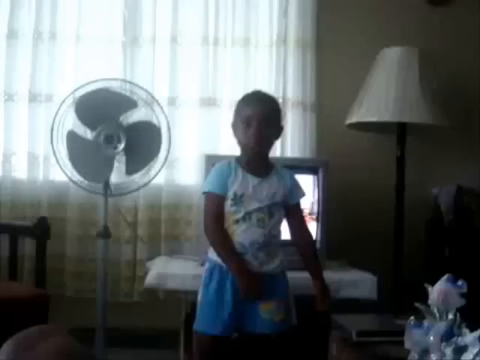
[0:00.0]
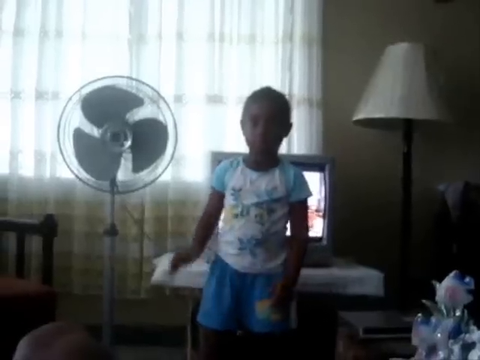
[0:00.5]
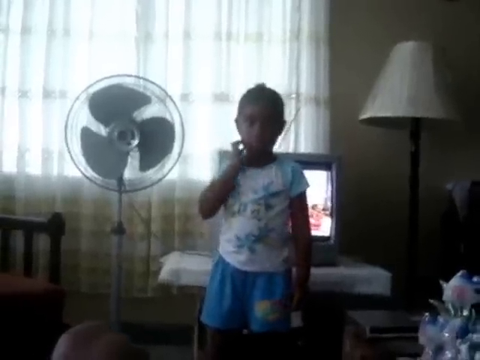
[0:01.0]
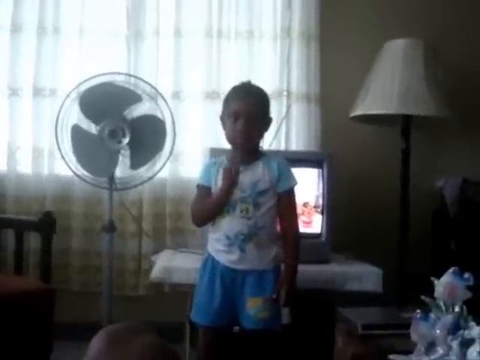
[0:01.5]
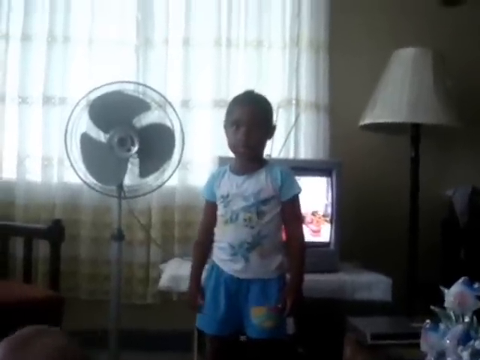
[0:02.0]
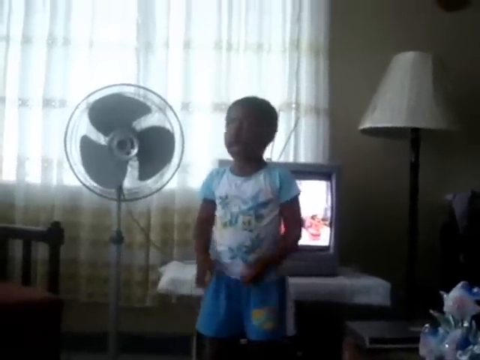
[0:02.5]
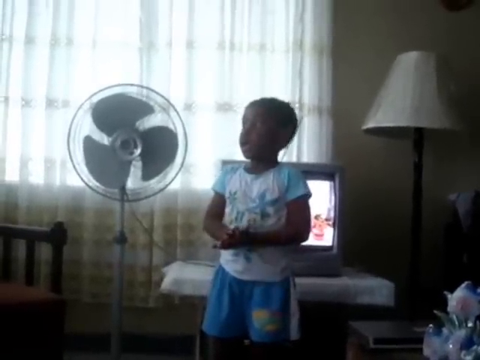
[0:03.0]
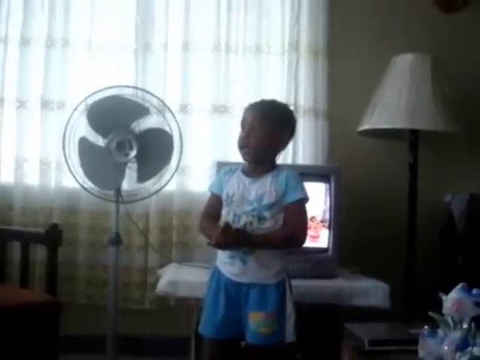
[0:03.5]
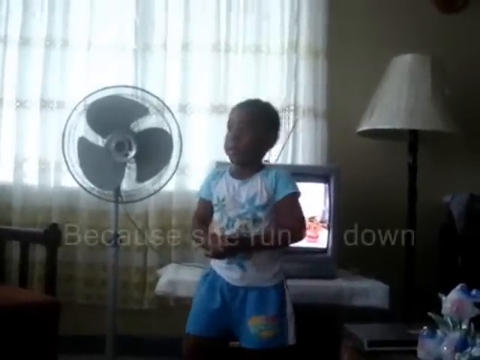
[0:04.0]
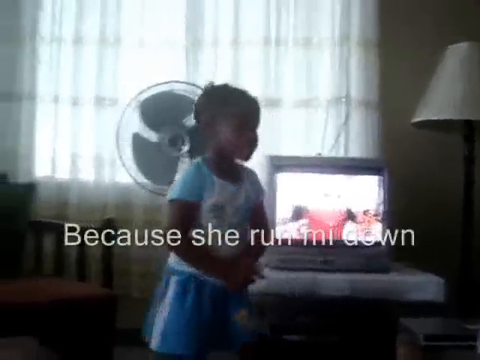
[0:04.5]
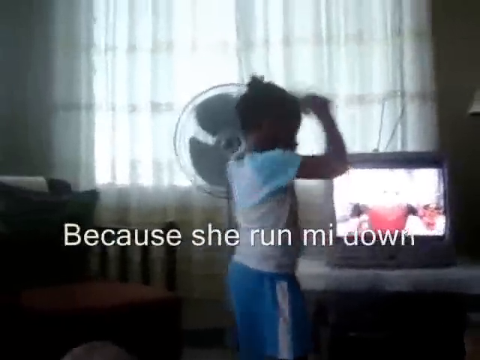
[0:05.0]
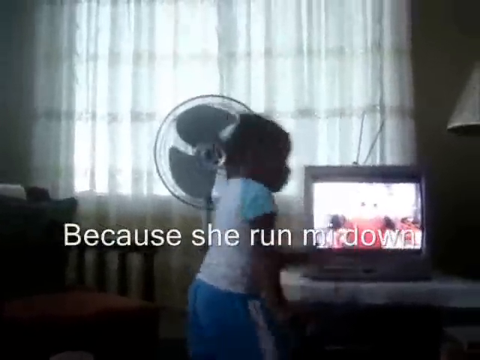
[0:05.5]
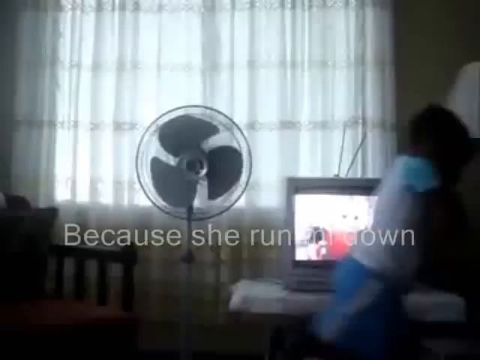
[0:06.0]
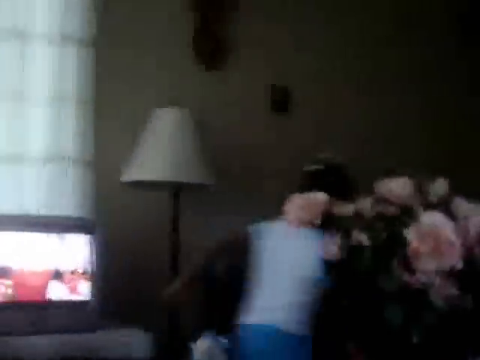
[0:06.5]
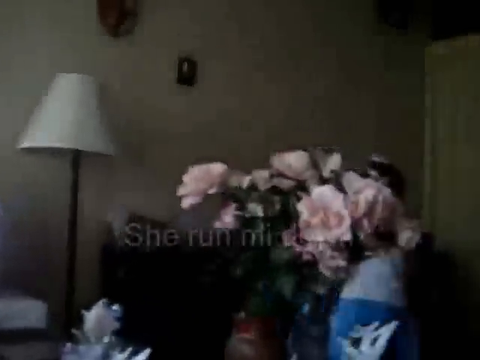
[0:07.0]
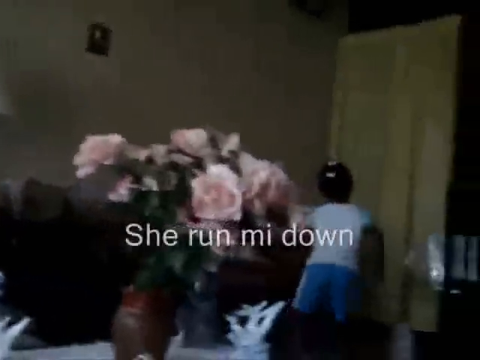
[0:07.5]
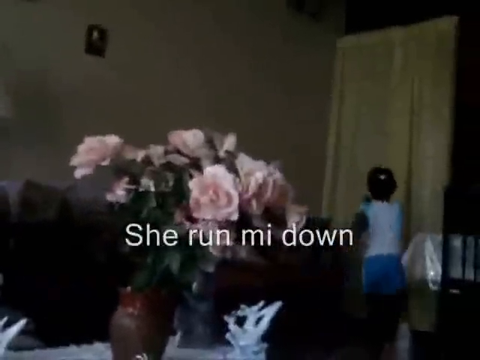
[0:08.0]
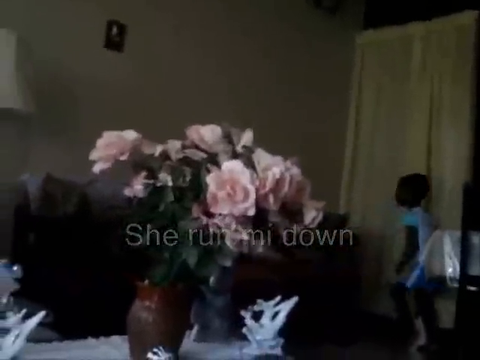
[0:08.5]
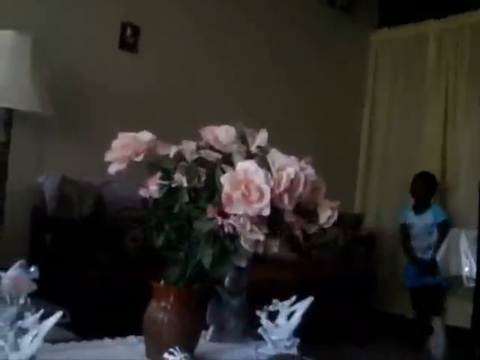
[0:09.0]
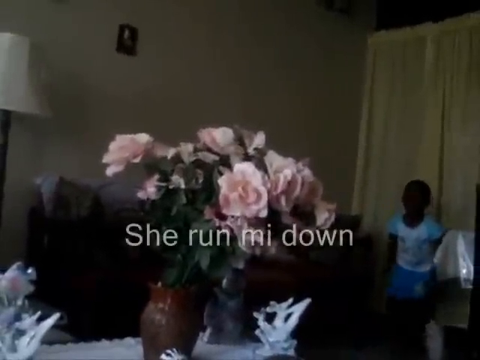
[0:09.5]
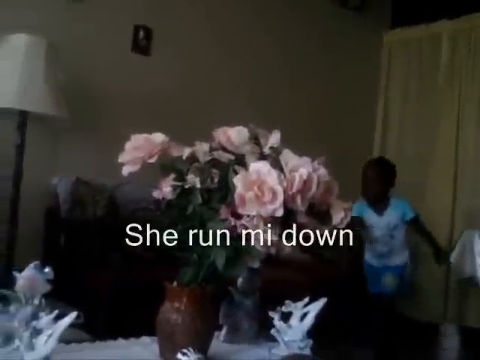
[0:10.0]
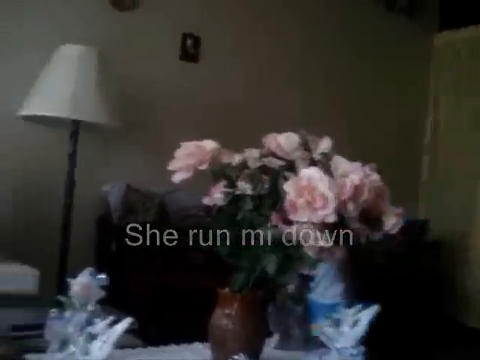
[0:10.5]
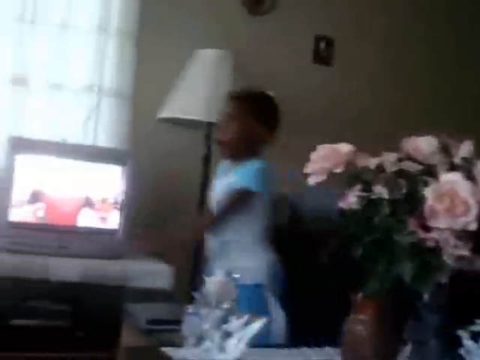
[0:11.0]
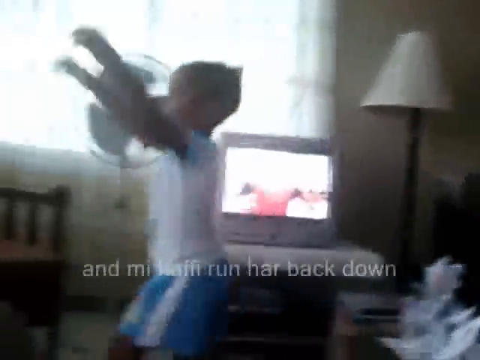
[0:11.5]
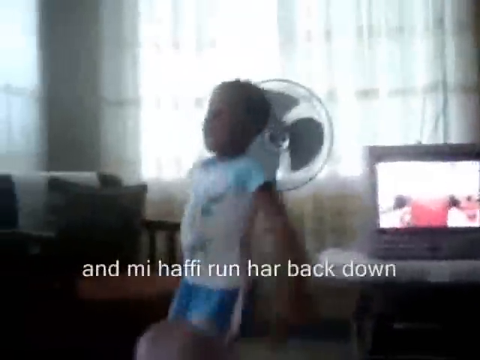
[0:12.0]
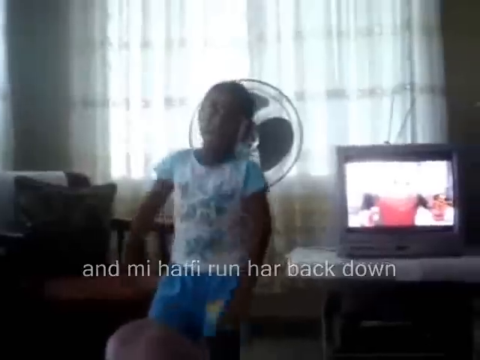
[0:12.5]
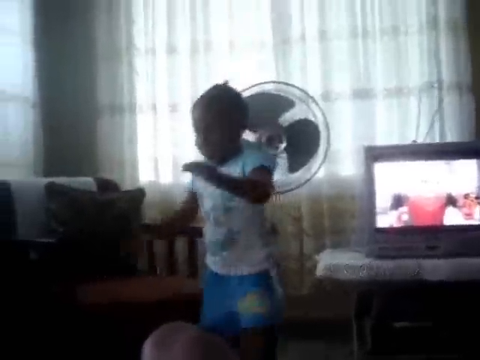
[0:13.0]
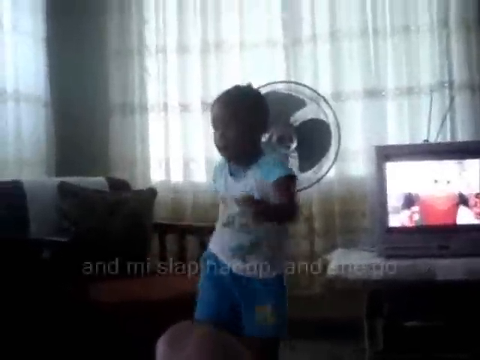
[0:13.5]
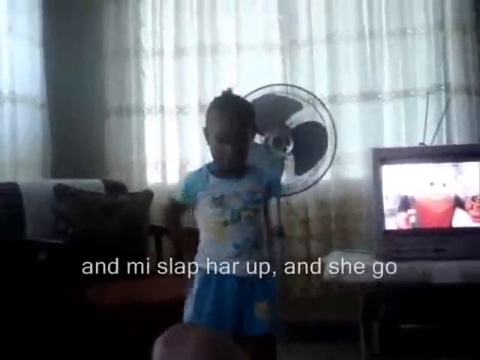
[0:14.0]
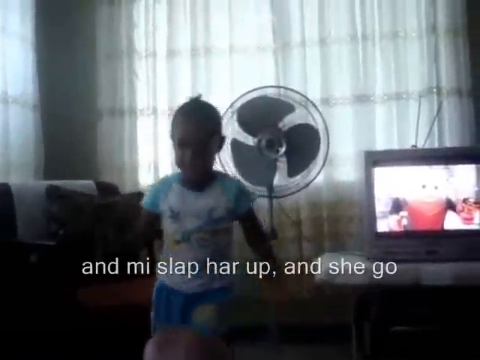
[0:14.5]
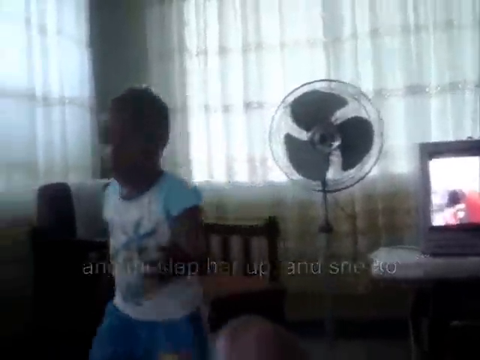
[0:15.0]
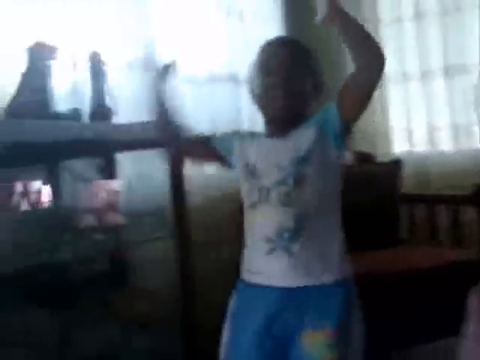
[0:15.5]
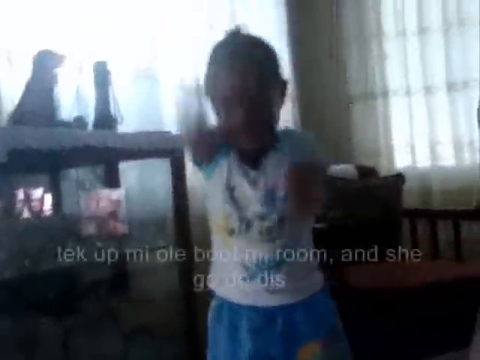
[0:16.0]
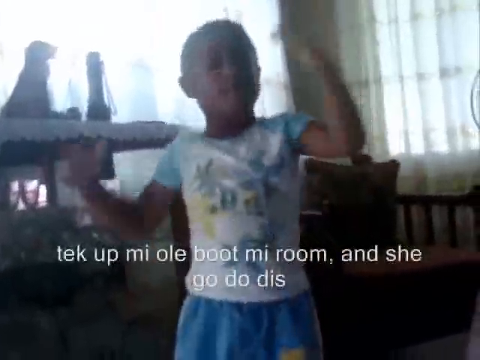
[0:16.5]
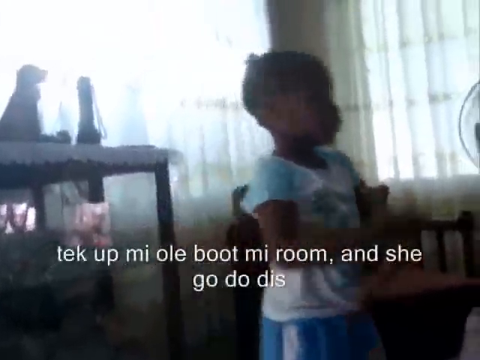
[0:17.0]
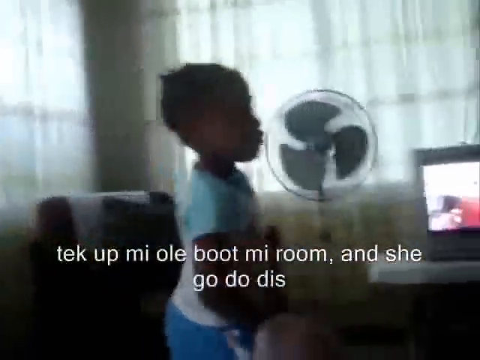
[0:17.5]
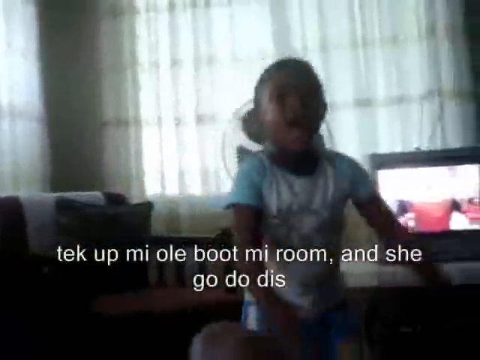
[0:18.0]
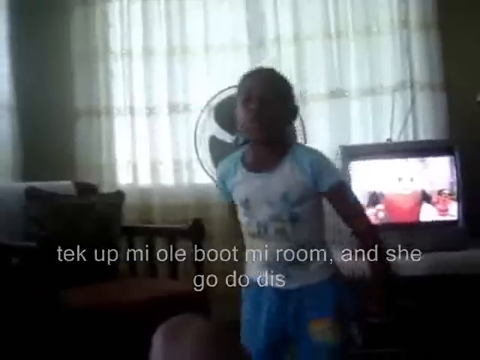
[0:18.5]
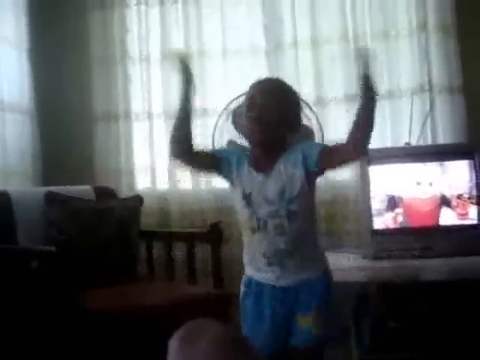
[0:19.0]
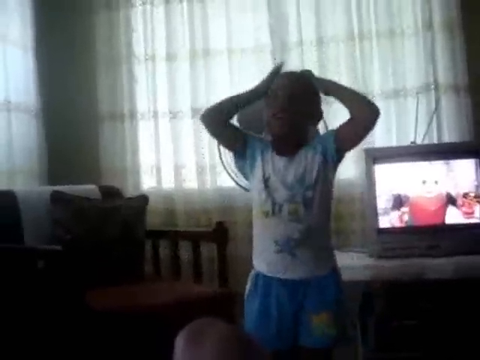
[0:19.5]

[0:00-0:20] The interior of a dimly lit house is lit only by natural sunlight; no lights are visibly on in the room being filmed. In the background there is an old CRT TV, quite thick and small, that is turned on. To its left is a fan that is not on, and to its right is a standing lamp that is not turned on. In front of all this stands a small, dark-skinned girl touching her face with her right hand. She starts prancing toward the right side of the room and then prances over to the left side while speaking, moving in a frantic up-and-down motion as if having fun, though her facial expressions seem to show that she is quite distressed.